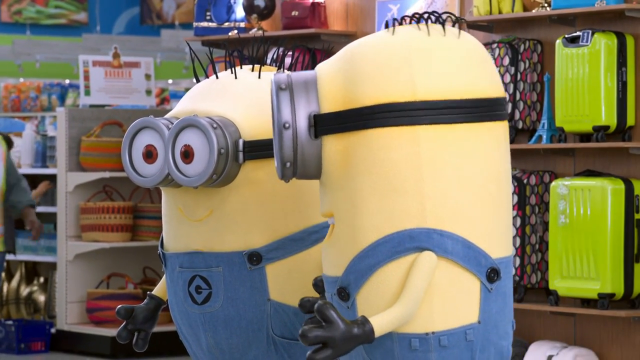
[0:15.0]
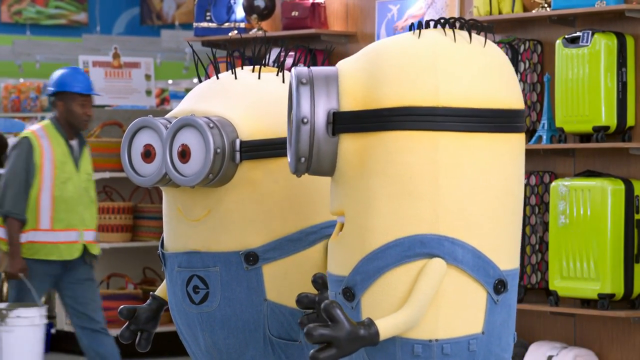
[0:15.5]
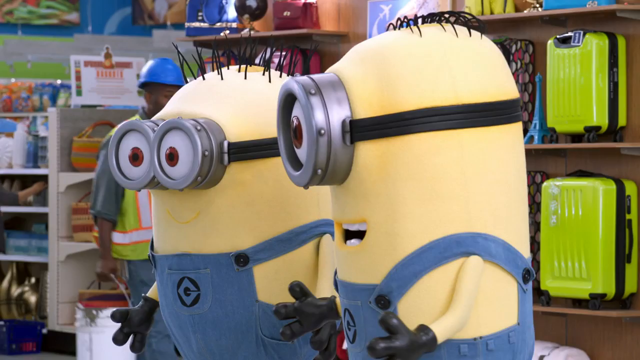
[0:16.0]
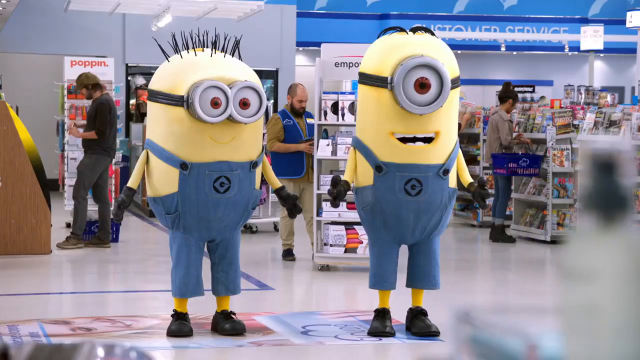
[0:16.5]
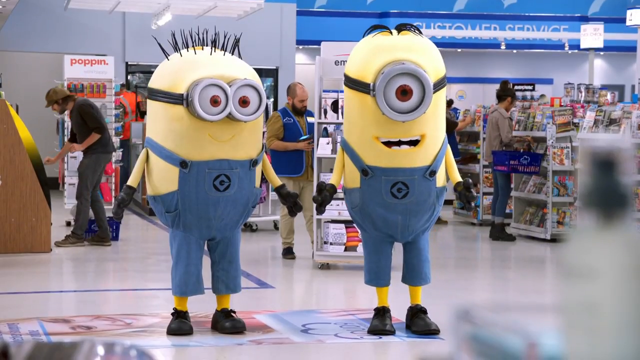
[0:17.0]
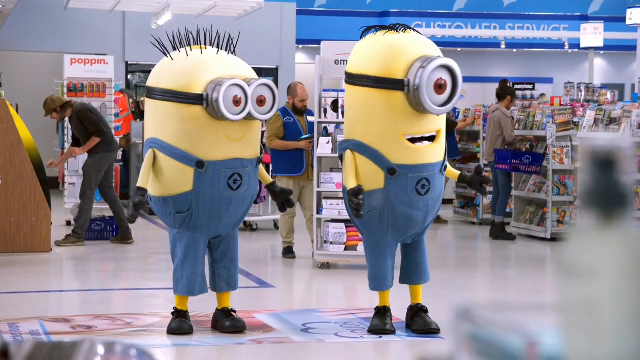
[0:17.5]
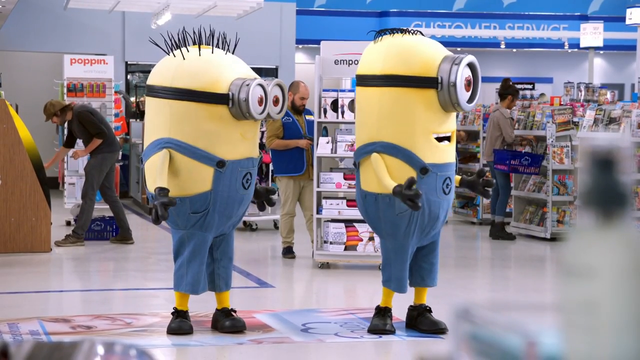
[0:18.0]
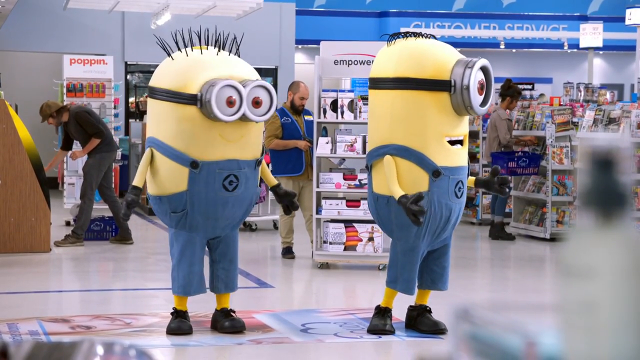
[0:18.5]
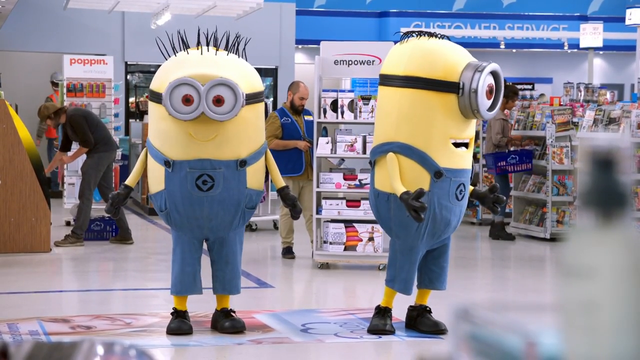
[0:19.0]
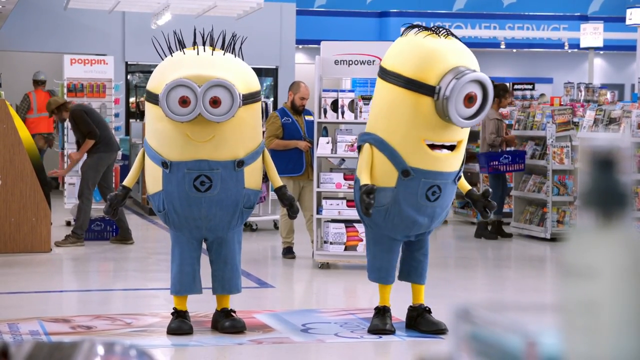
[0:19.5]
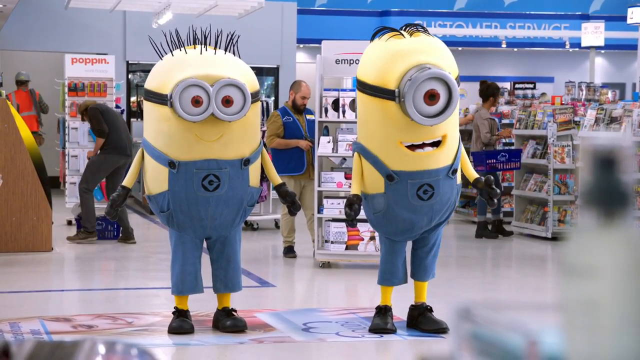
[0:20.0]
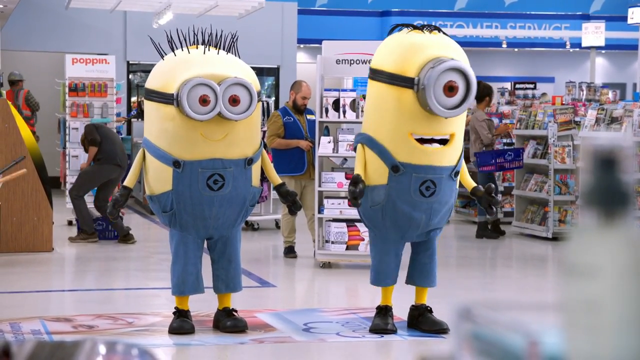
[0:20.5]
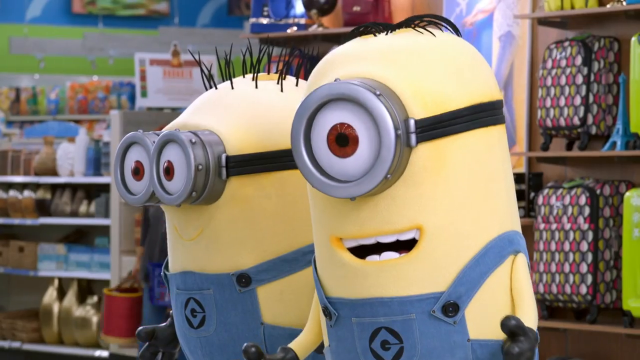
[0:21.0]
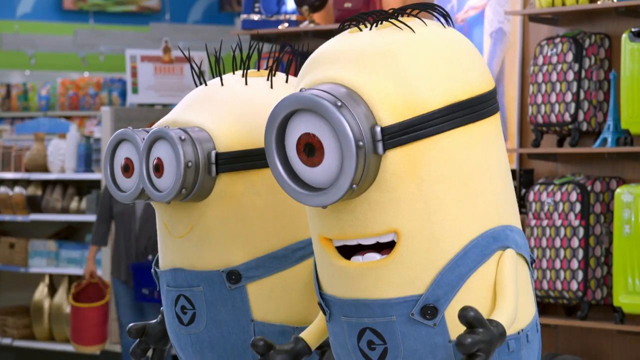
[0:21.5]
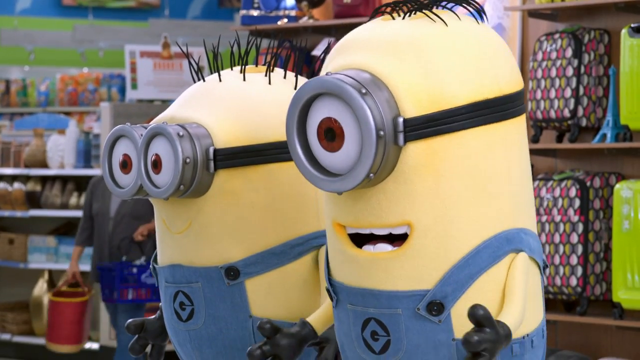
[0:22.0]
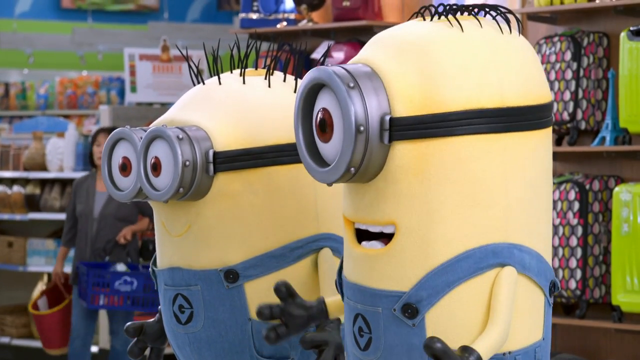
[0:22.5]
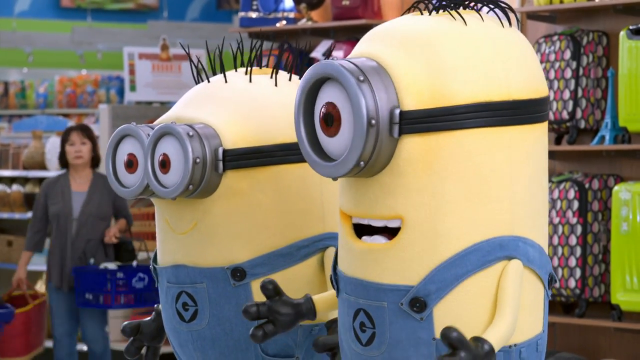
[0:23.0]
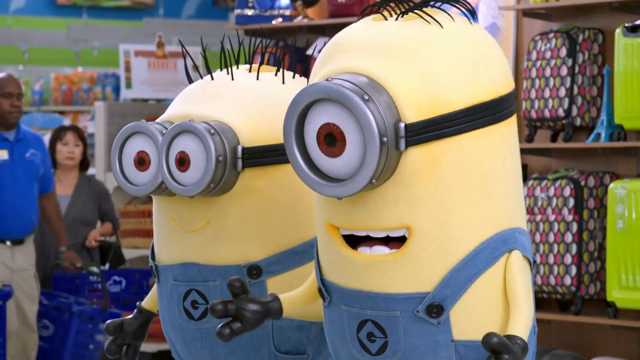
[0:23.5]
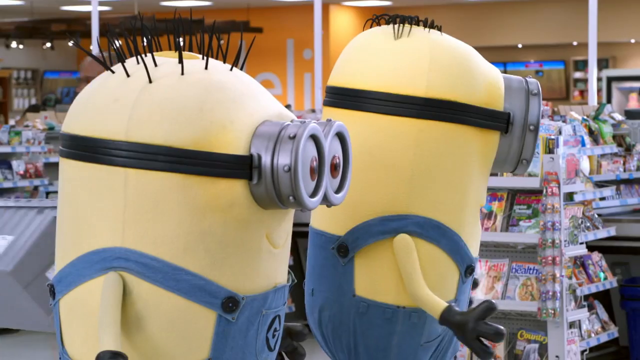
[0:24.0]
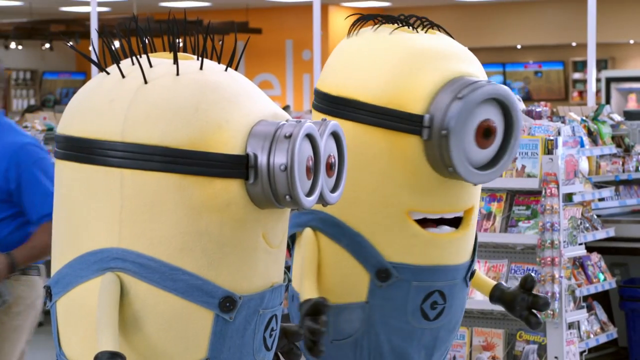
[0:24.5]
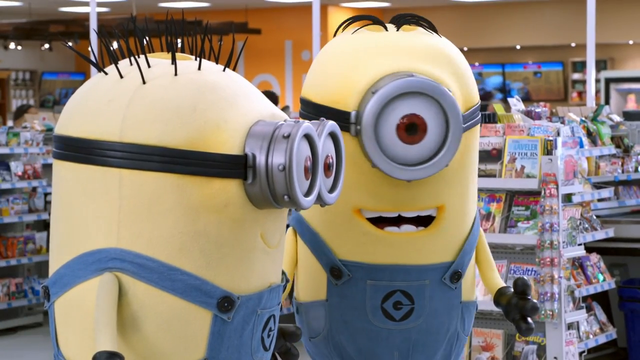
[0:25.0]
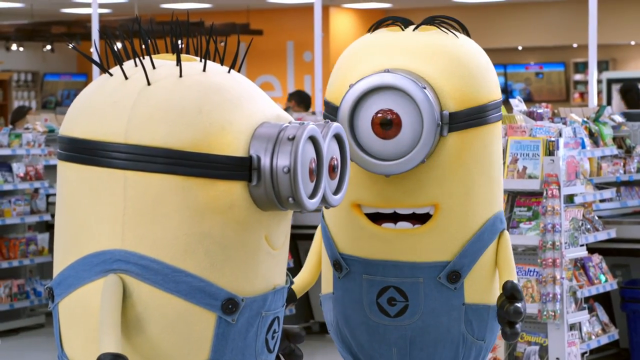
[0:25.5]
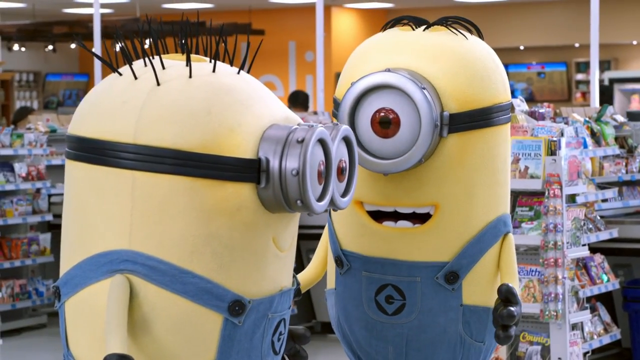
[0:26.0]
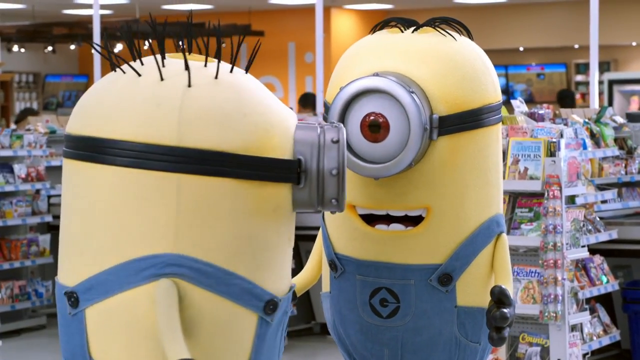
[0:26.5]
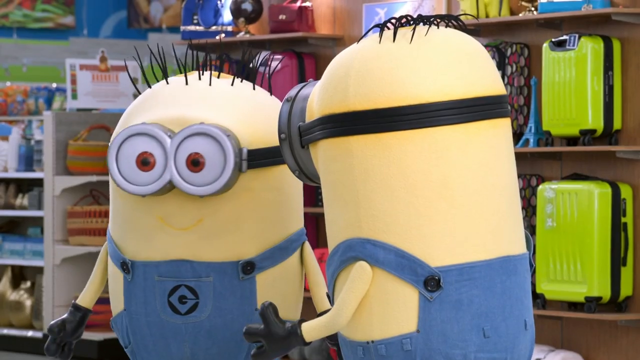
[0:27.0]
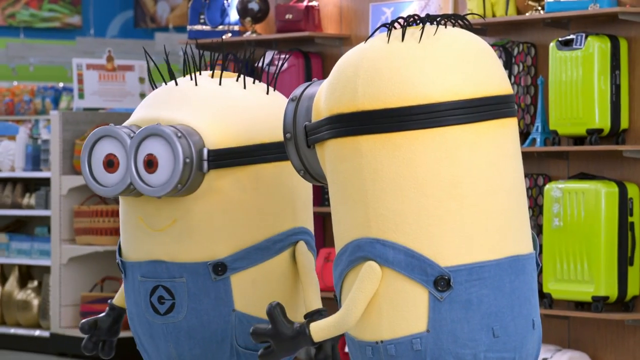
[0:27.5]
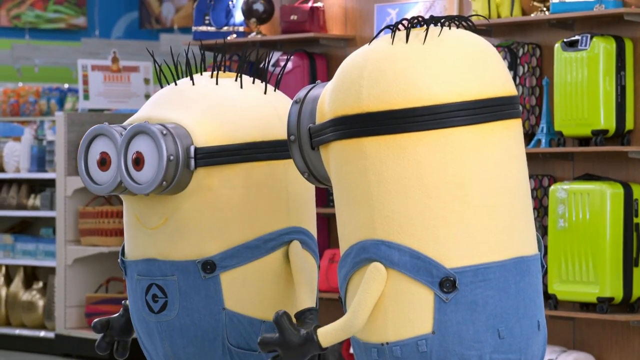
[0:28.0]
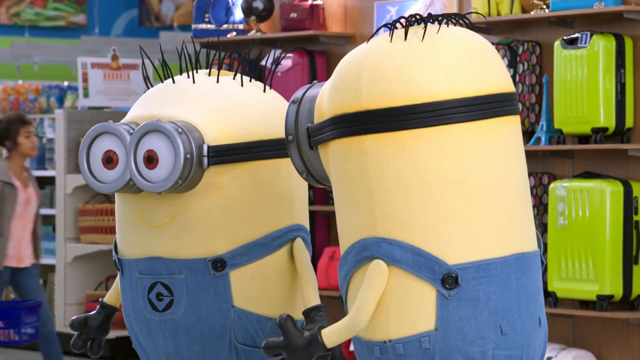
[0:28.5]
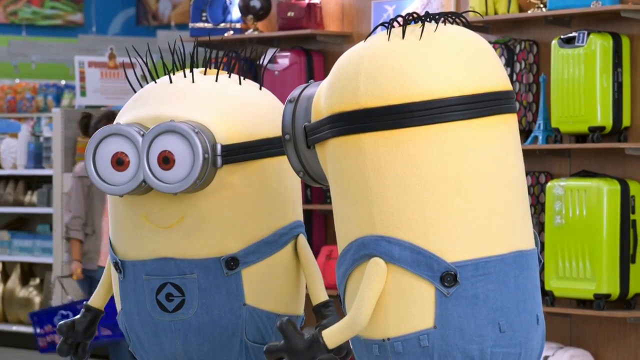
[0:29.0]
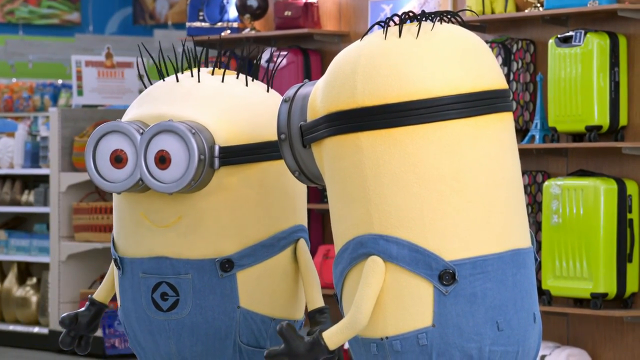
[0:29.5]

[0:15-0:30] Minions are in the middle of a superstore, dancing a little, turning and looking at each other. Behind them, shoppers with blue baskets are shopping and picking up purchases, and store workers wearing blue vests go around tidying up the store. Suitcases are on shelves right behind the minions; one suitcase is lime green and one is polka dot. Woven baskets are on some nearby shelves. A construction worker in a safety vest and a blue hard hat passes through carrying a large bucket. A display says "Poppins" on the top of it, and there are other items on shelves that cannot really be distinguished. A customer service area in the background is labeled in blue across the wall, and about three or four customers and two construction workers are seen in the background.